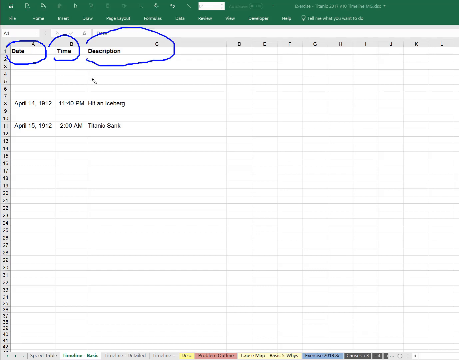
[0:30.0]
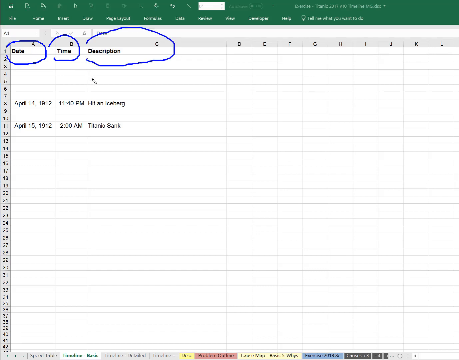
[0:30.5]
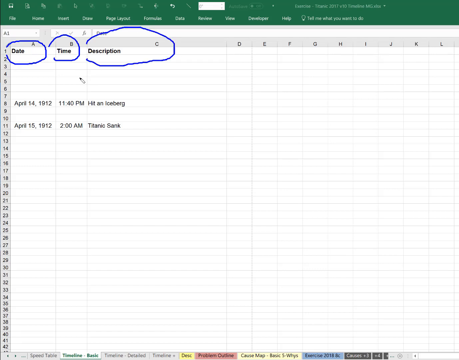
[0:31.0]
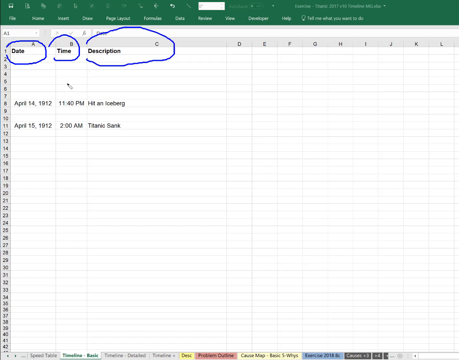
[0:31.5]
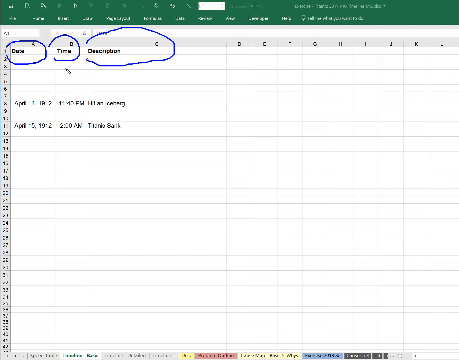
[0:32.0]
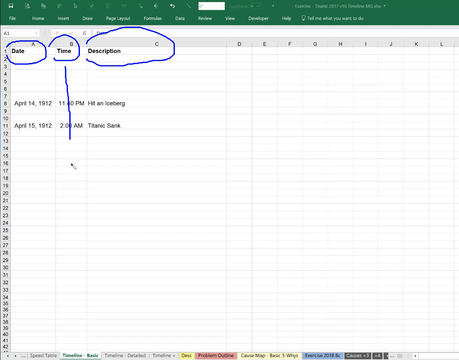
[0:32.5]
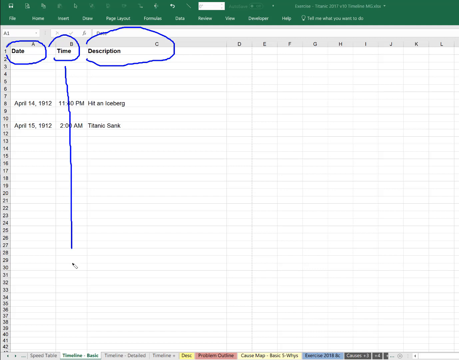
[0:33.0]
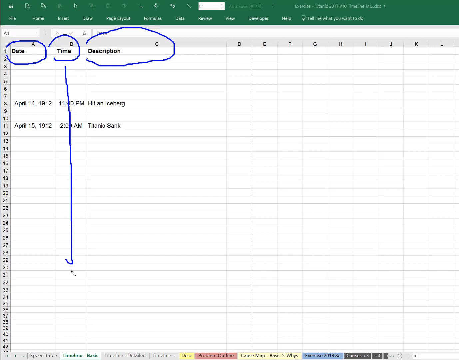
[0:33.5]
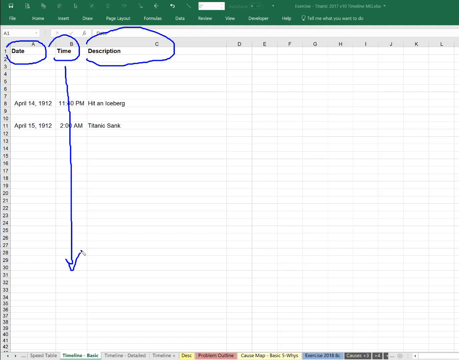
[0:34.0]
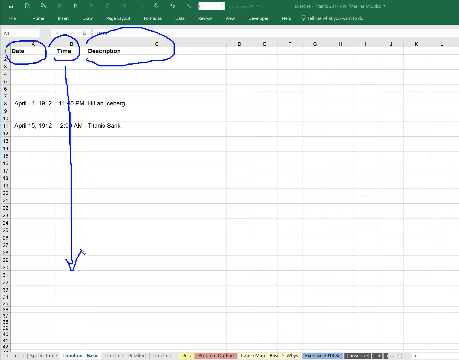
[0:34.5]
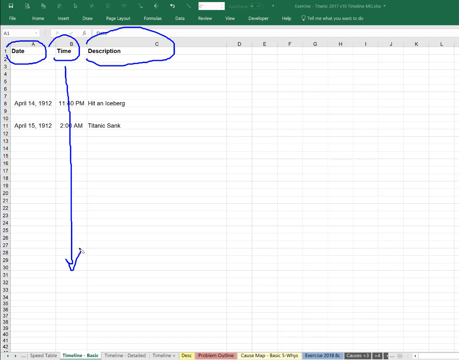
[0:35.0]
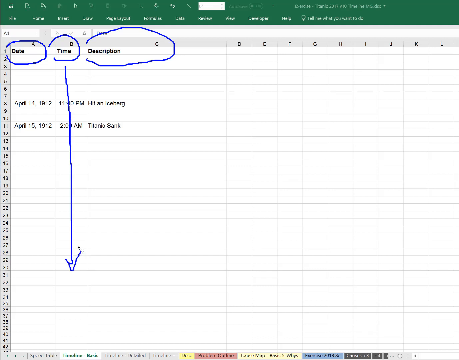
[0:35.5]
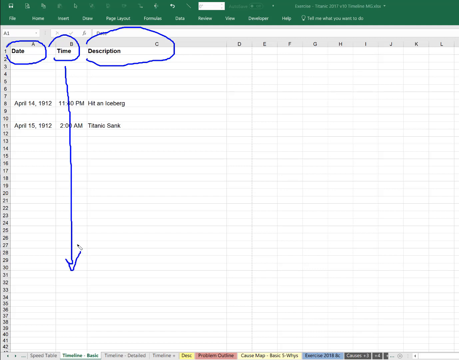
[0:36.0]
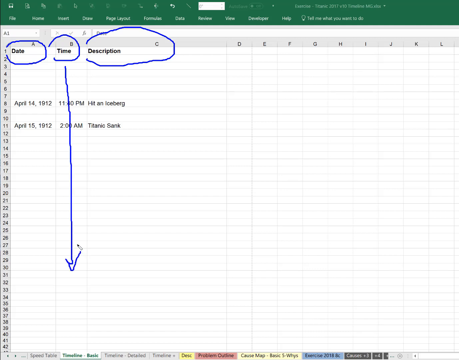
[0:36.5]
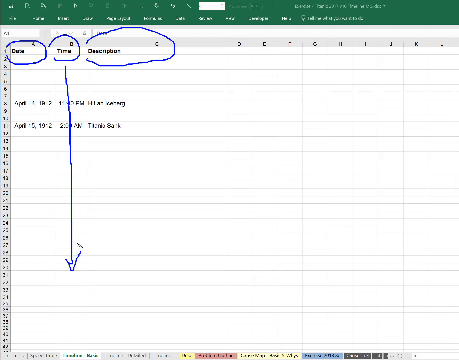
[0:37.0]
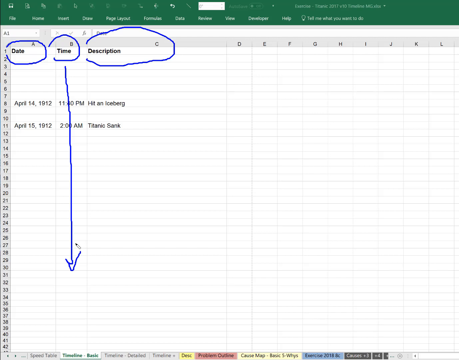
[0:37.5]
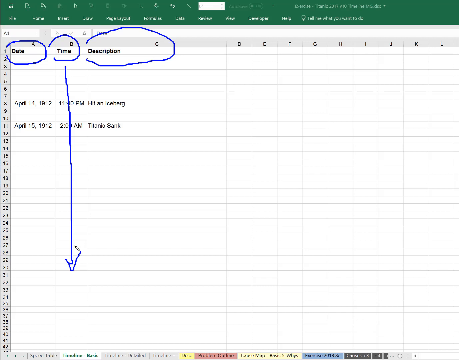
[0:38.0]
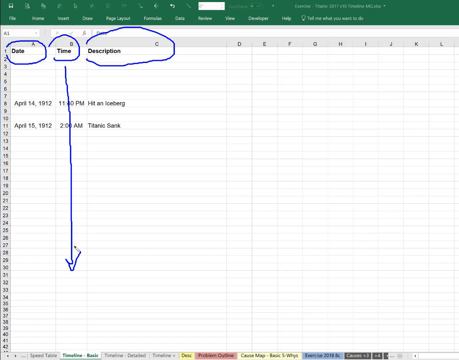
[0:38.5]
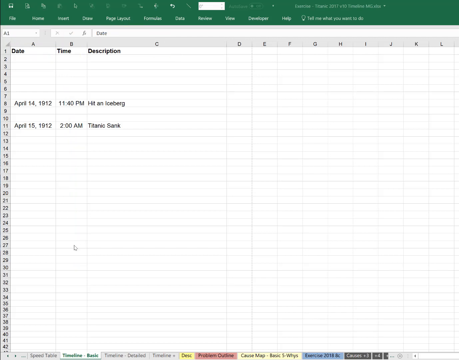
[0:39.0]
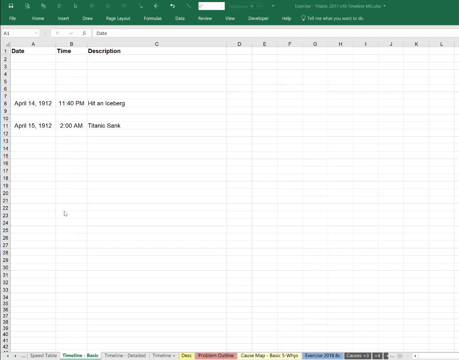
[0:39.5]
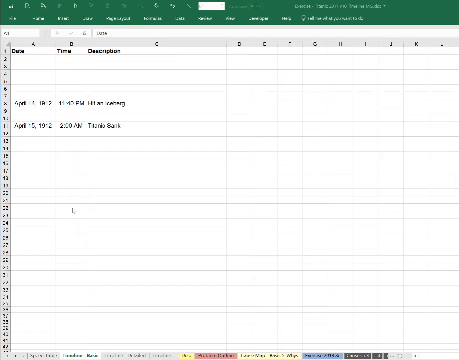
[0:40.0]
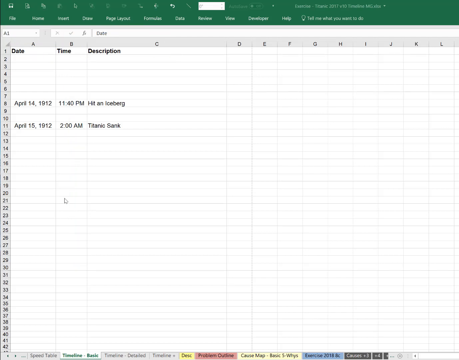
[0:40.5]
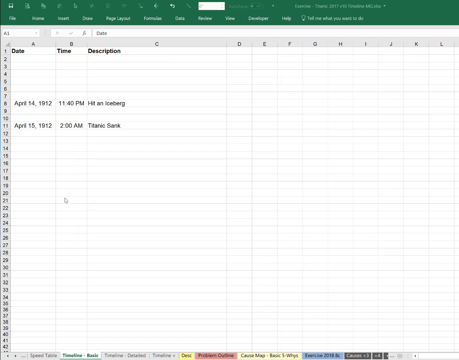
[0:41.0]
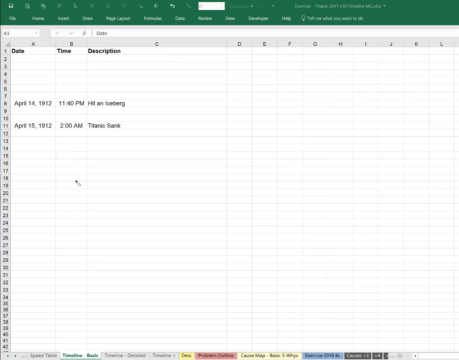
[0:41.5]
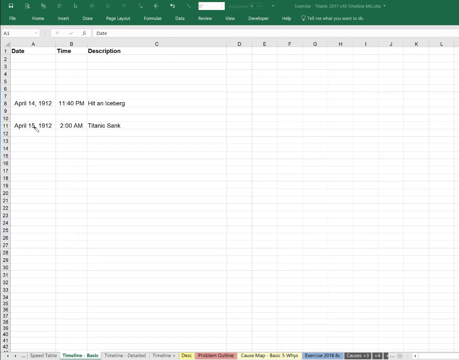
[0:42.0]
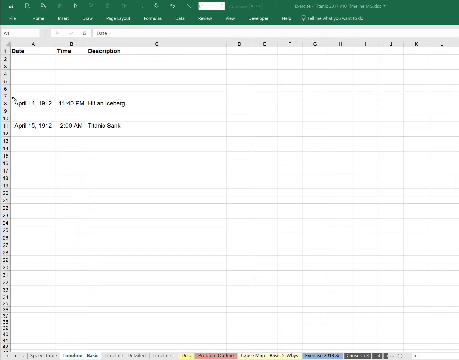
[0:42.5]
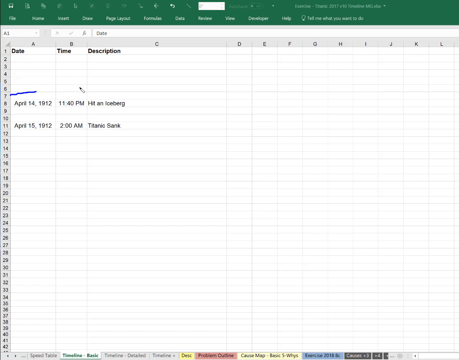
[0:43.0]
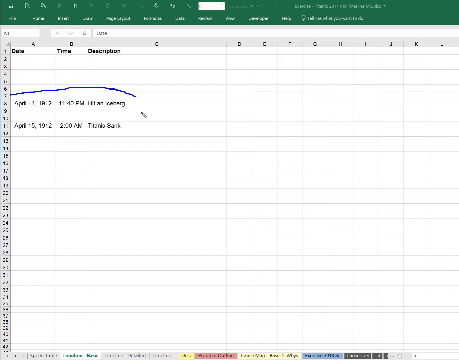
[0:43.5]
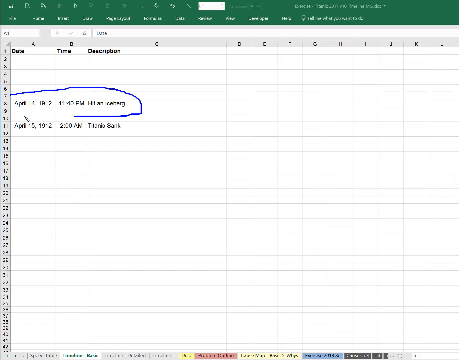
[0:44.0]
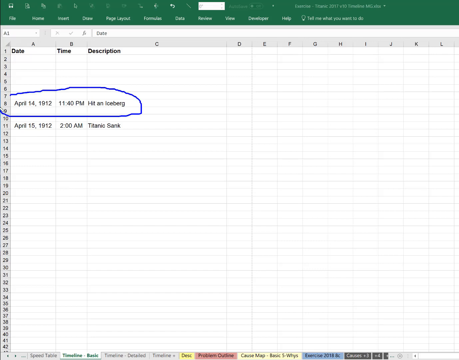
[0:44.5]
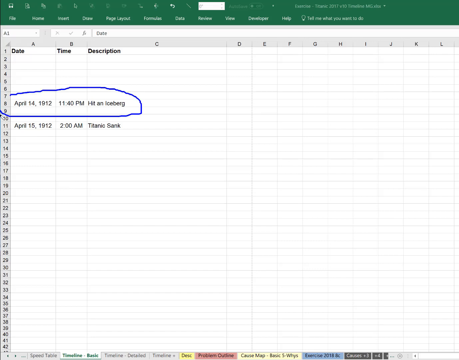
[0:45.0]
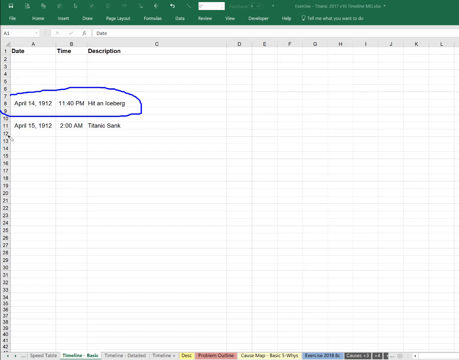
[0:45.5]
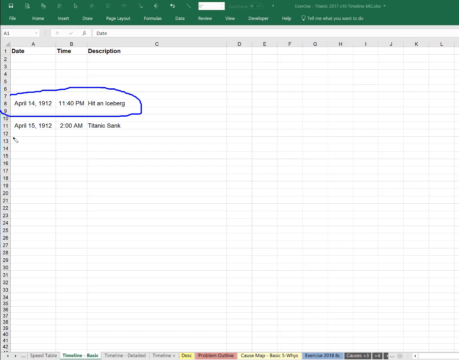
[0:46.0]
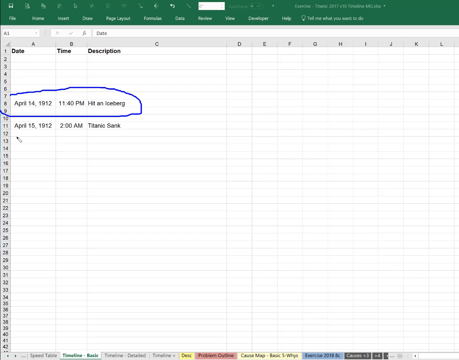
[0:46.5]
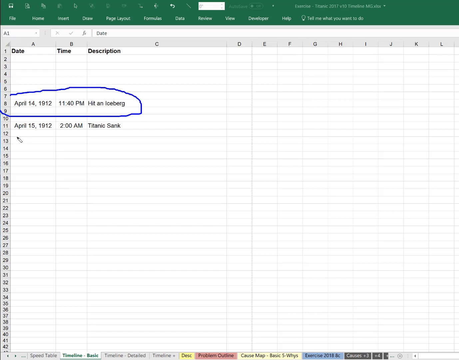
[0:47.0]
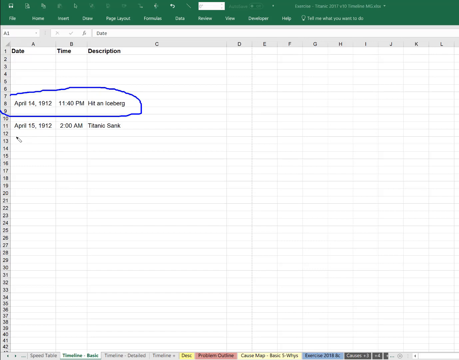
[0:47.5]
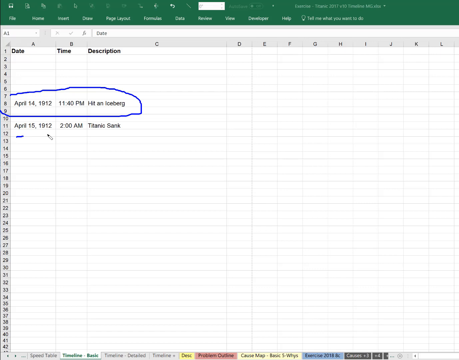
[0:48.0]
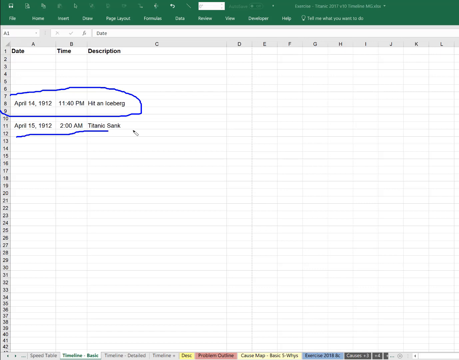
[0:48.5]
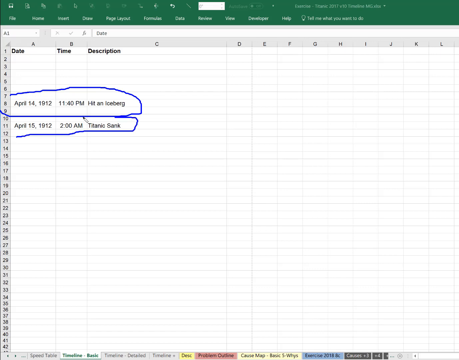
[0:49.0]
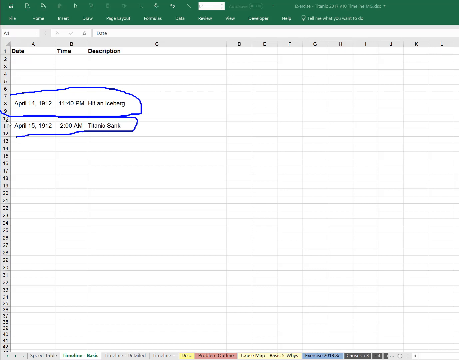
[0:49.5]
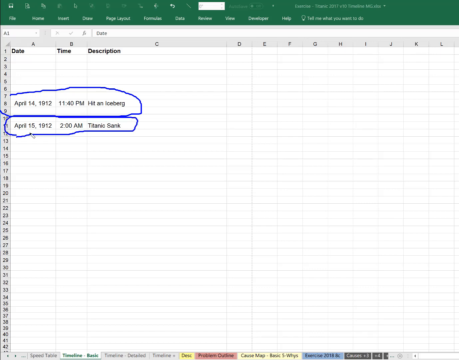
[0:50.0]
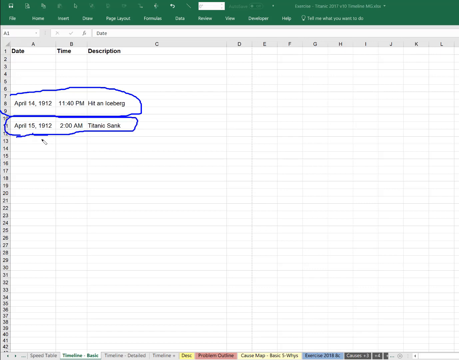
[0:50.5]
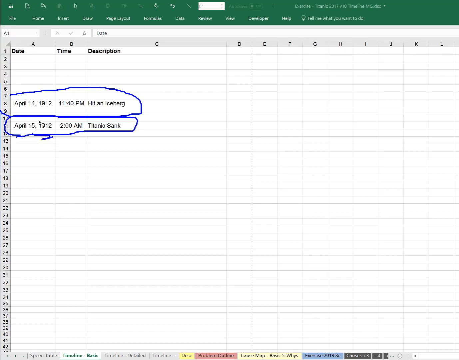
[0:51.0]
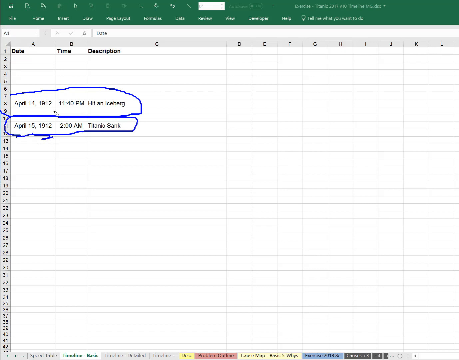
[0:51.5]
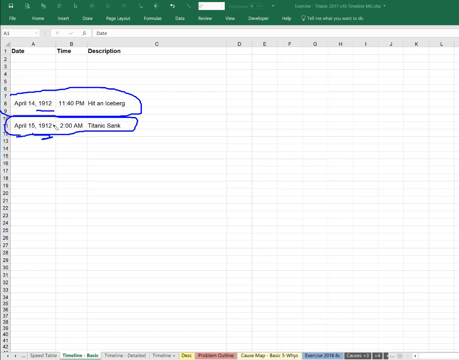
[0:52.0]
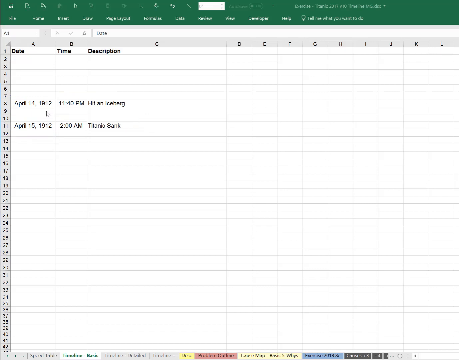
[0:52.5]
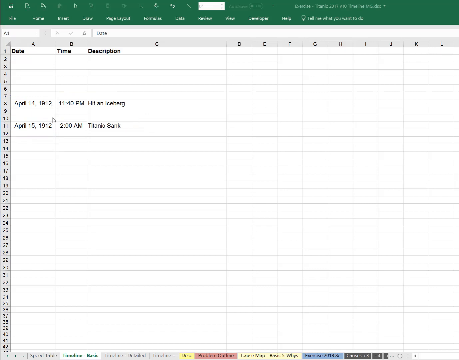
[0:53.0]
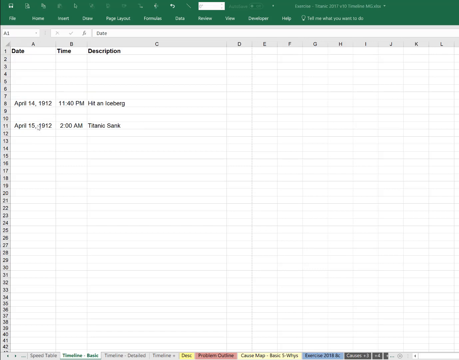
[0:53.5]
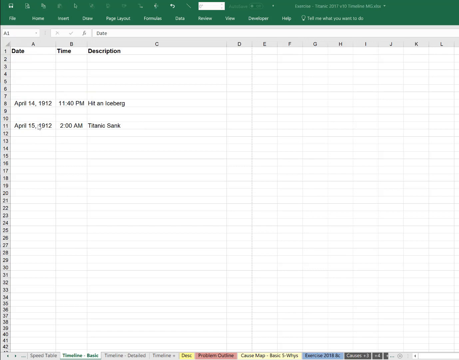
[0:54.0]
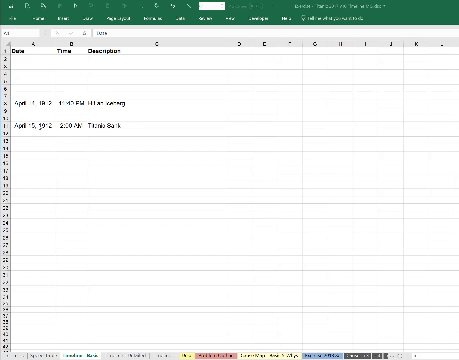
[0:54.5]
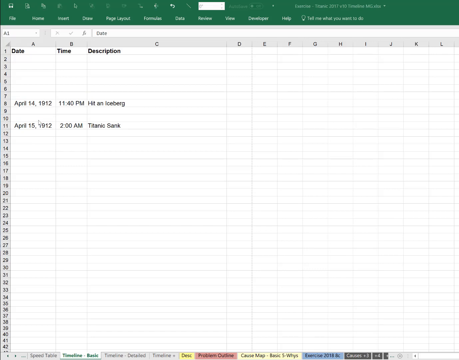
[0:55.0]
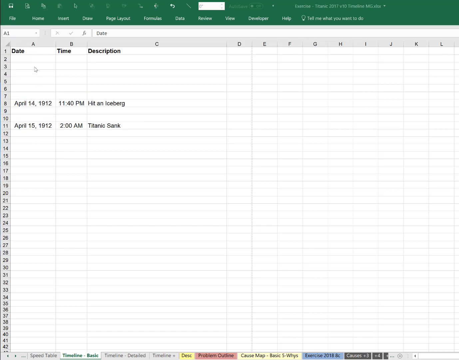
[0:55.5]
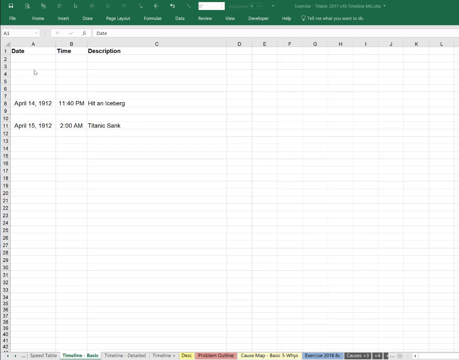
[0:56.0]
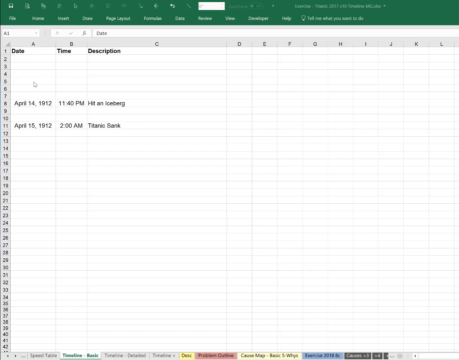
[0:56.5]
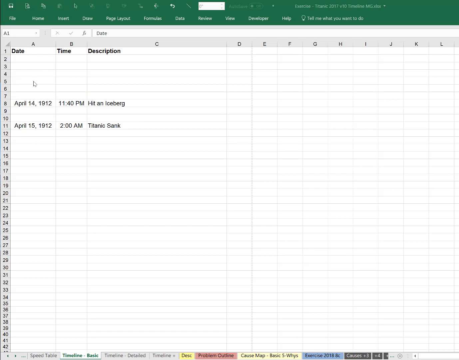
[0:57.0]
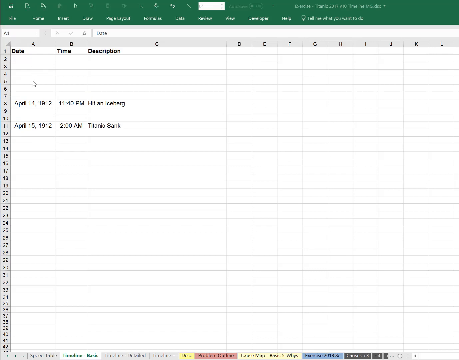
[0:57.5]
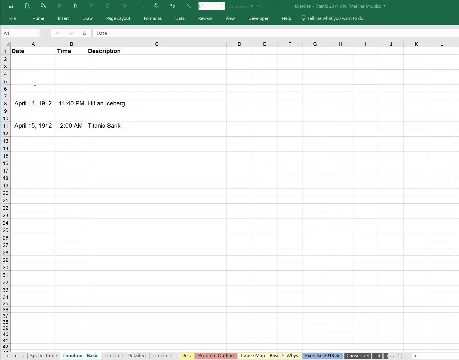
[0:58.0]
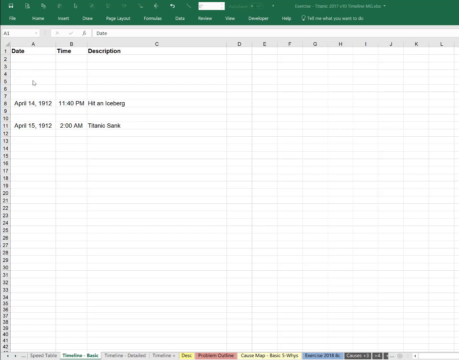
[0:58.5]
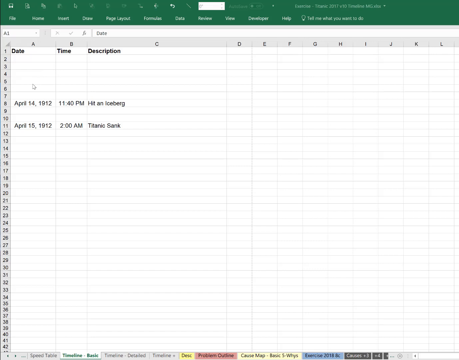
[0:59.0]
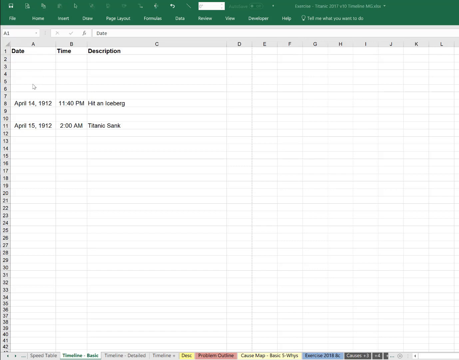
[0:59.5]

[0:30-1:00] Date, time, and description are circled in blue. The user draws a long vertical arrow pointing down from time, then moves the cursor around, and the circles around date, time, and description disappear. The user then circles row 8 in blue, which reads April 14, 1912, 1140 p.m., hit an iceberg, and also circles row 11, which reads April 15, 1912, 2 a.m., Titanic sank. The user underlines 1912 on both row 8 and row 11. The circles then disappear, leaving the sheet blank of blue circles, and the user places the cursor over rows 5 and 6.